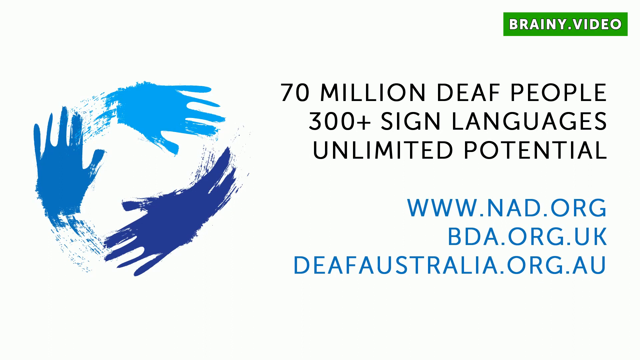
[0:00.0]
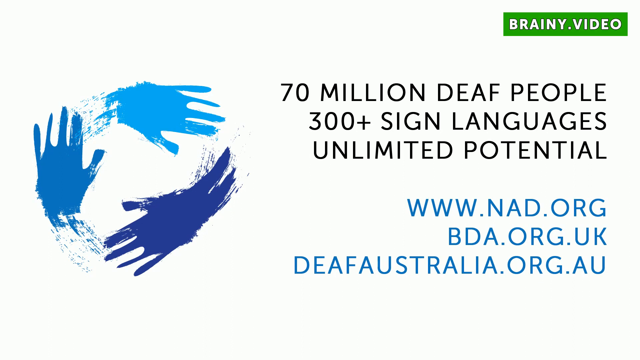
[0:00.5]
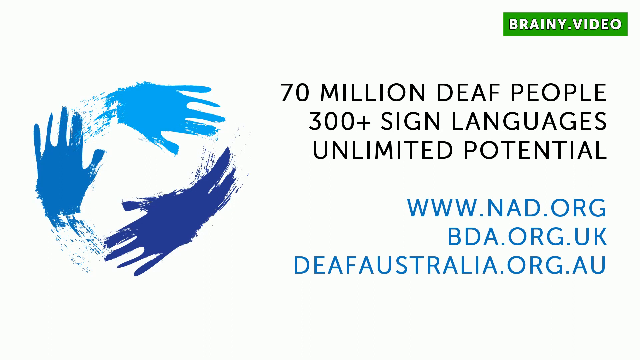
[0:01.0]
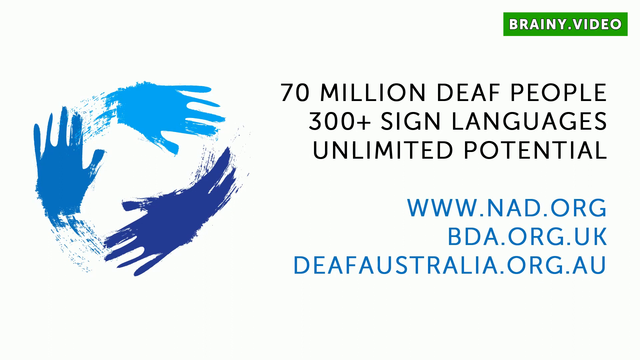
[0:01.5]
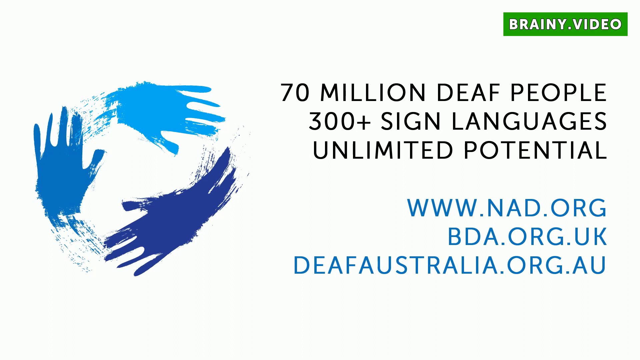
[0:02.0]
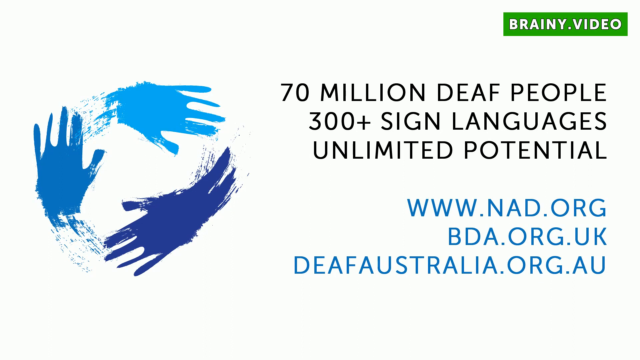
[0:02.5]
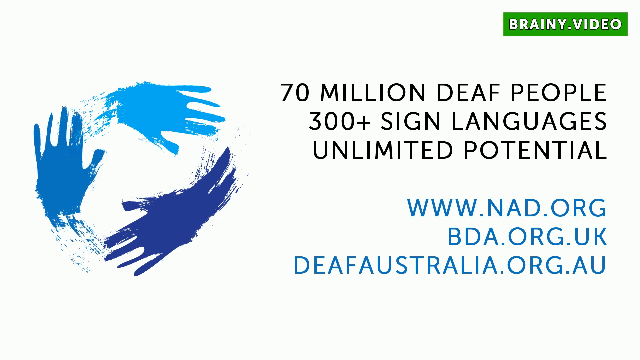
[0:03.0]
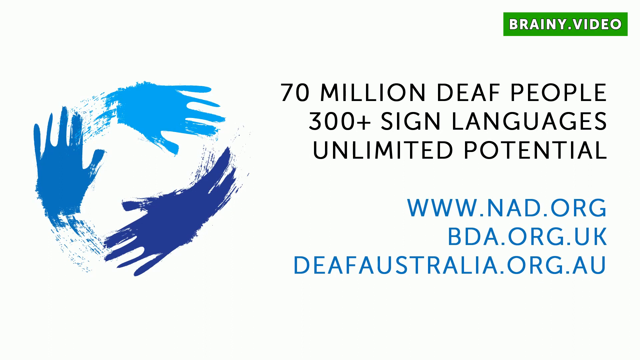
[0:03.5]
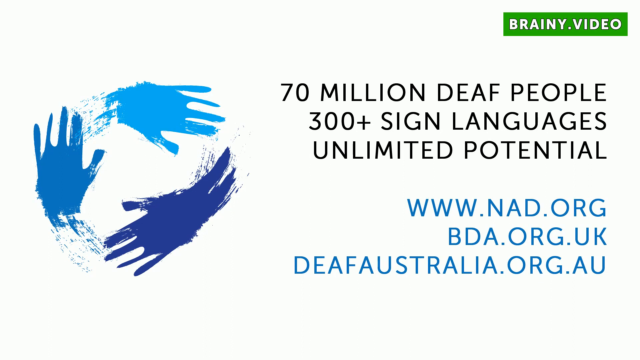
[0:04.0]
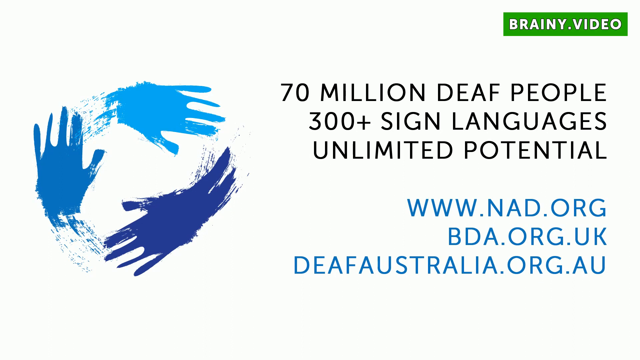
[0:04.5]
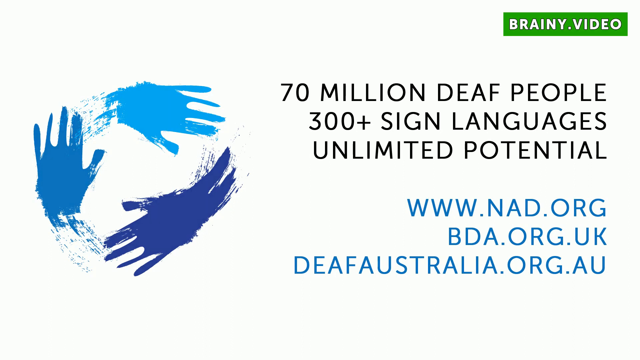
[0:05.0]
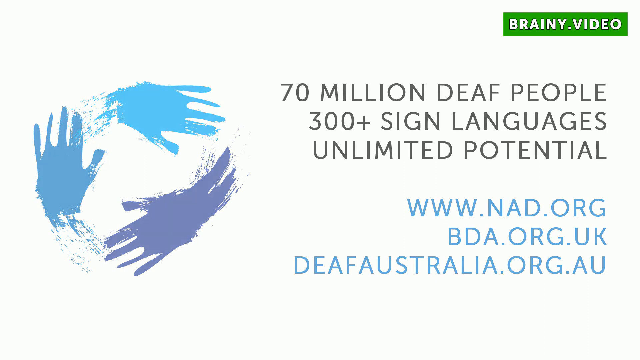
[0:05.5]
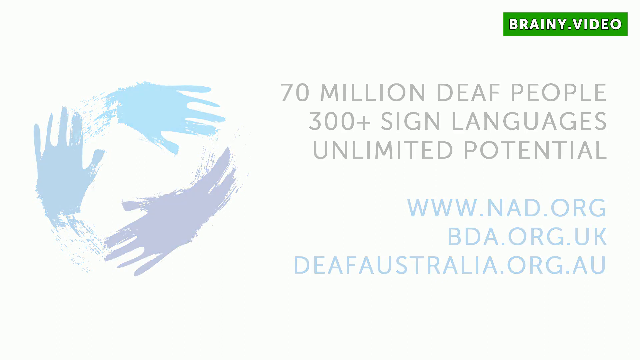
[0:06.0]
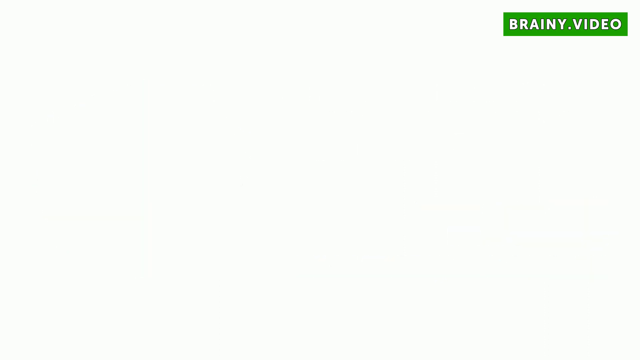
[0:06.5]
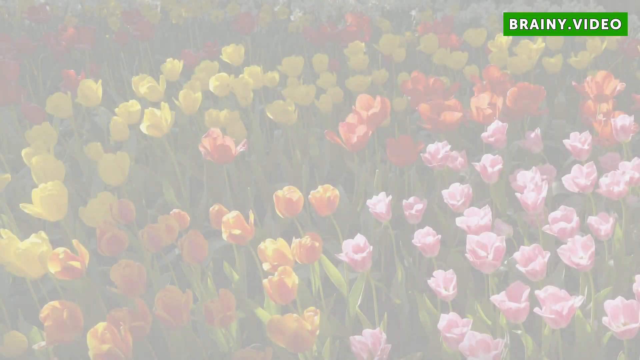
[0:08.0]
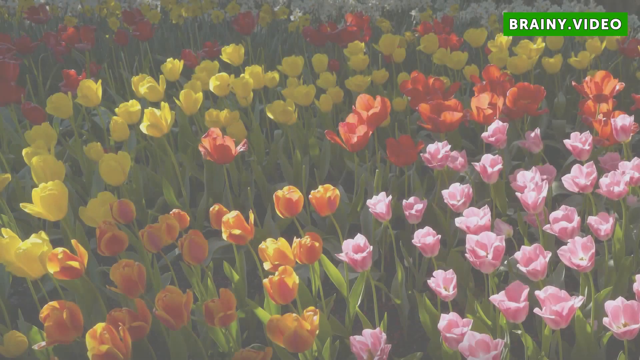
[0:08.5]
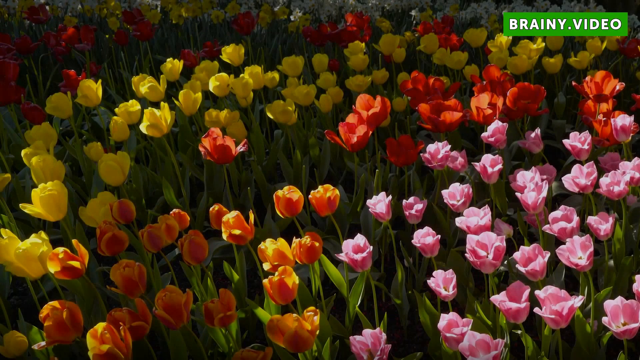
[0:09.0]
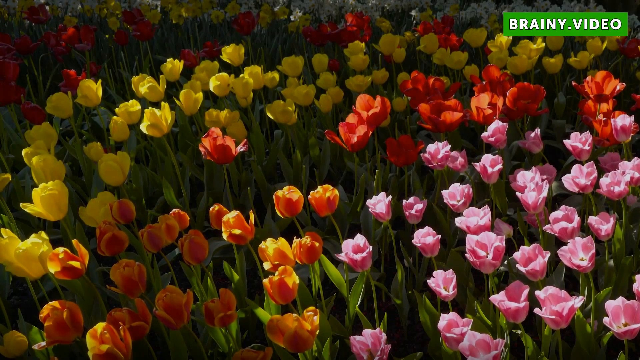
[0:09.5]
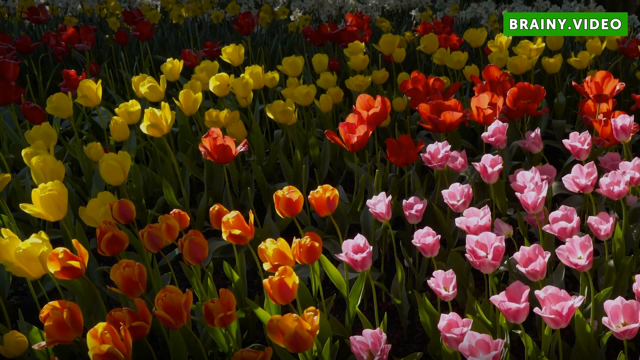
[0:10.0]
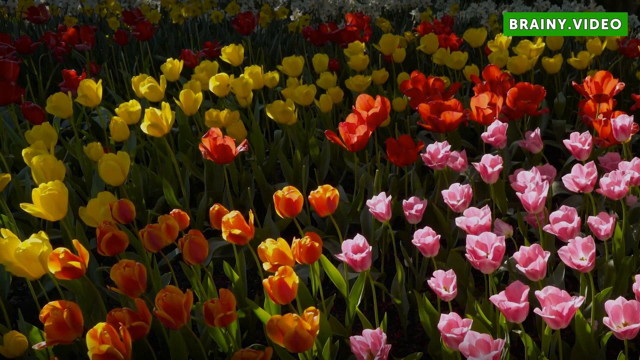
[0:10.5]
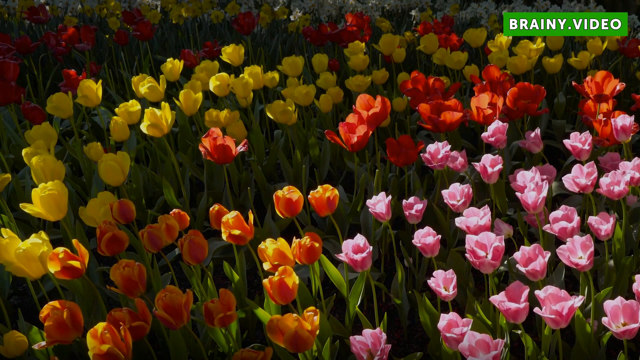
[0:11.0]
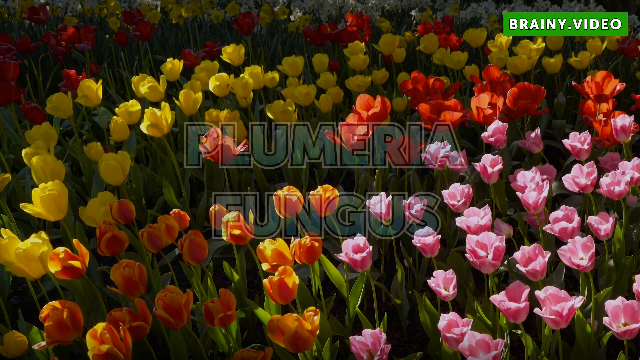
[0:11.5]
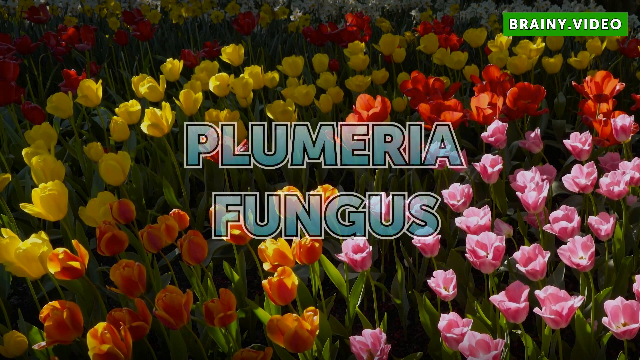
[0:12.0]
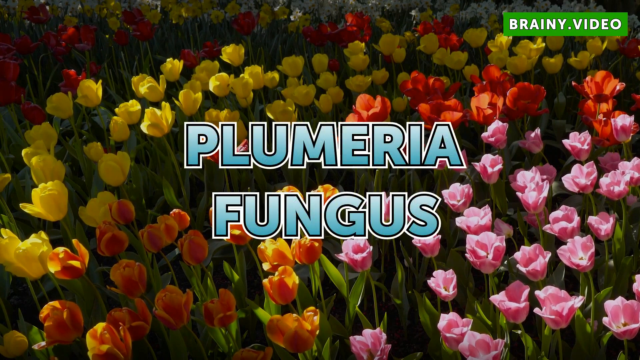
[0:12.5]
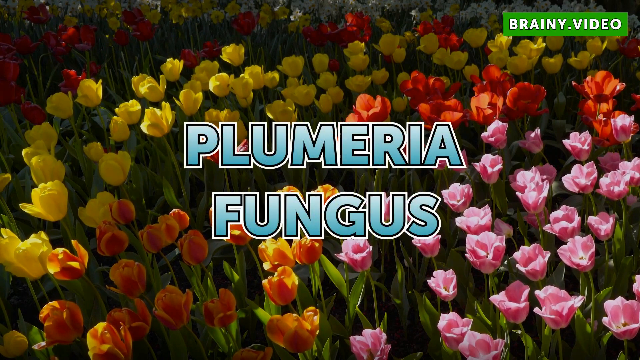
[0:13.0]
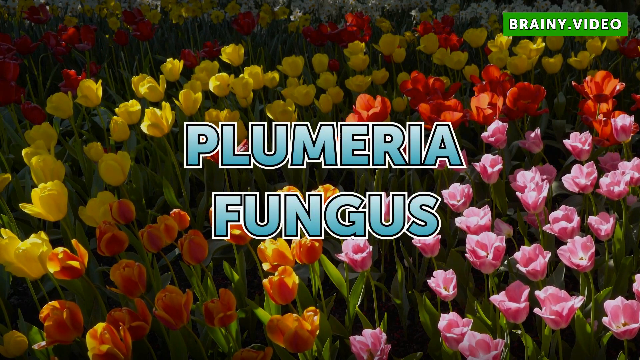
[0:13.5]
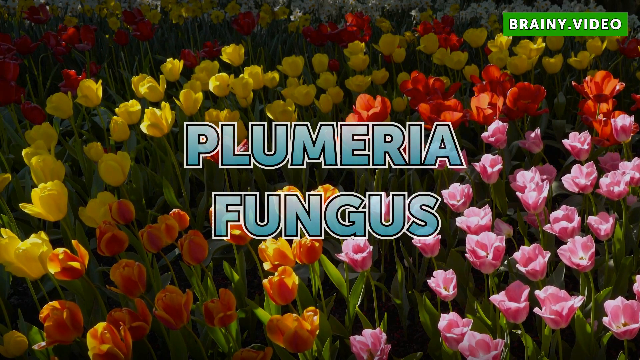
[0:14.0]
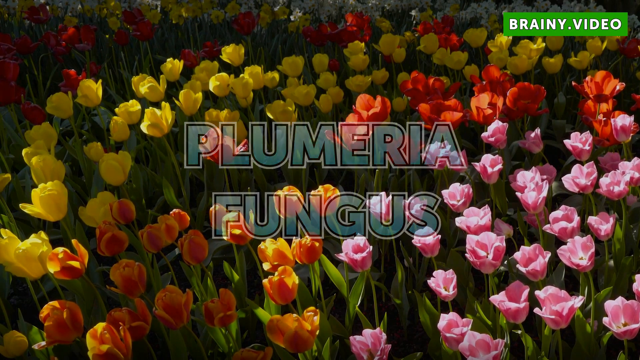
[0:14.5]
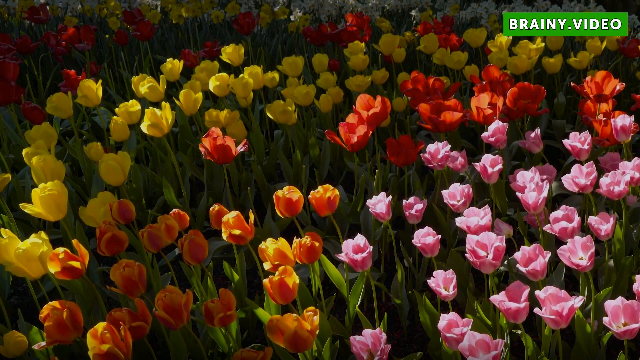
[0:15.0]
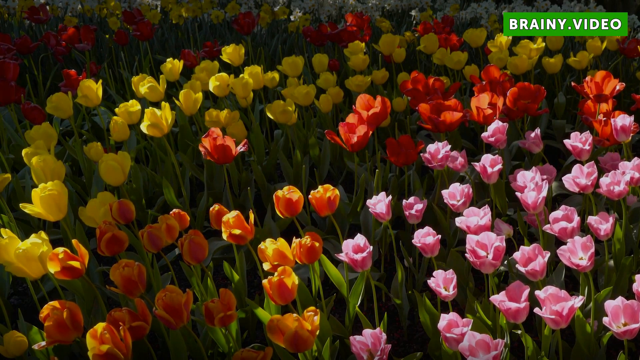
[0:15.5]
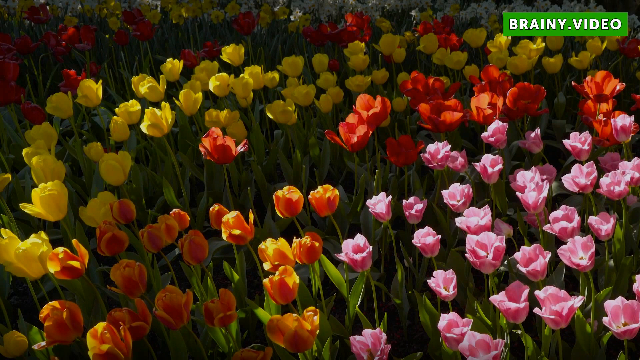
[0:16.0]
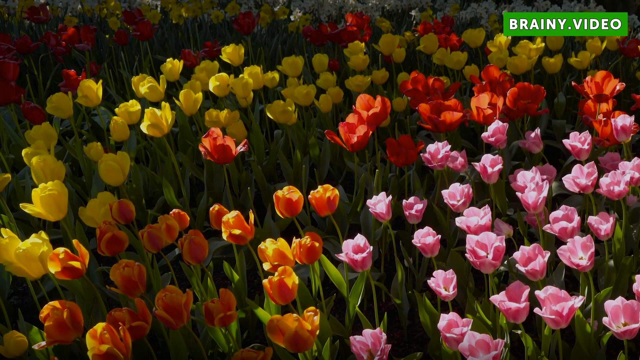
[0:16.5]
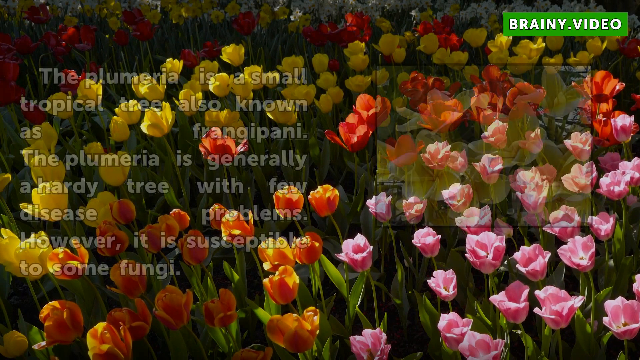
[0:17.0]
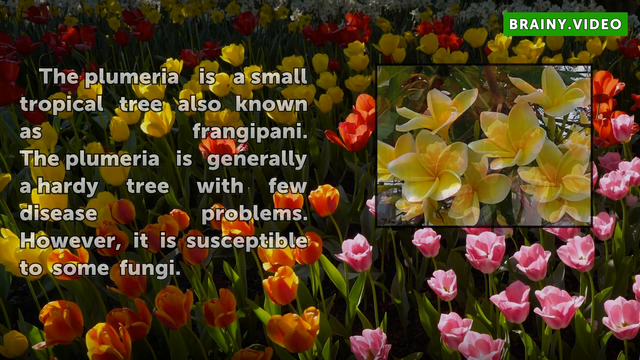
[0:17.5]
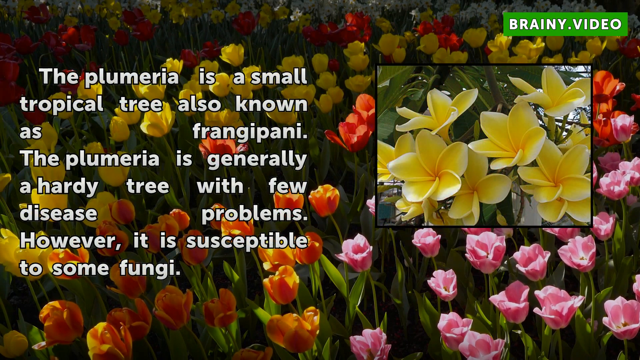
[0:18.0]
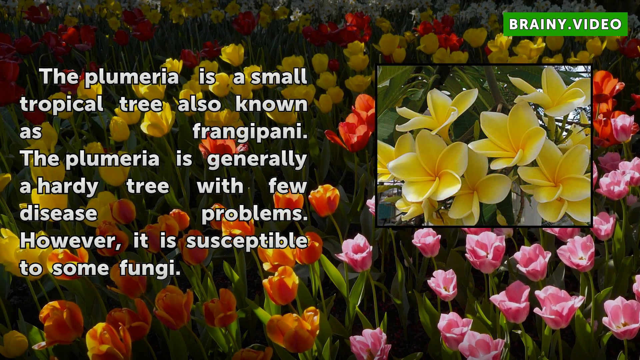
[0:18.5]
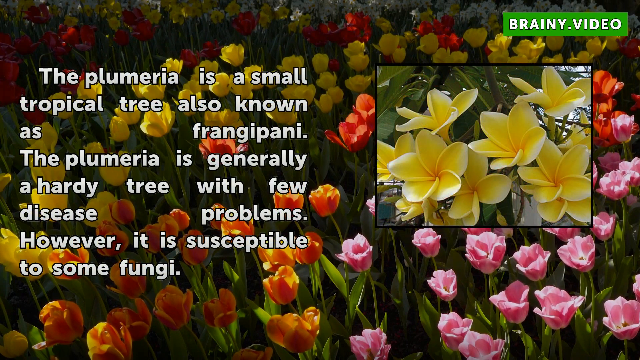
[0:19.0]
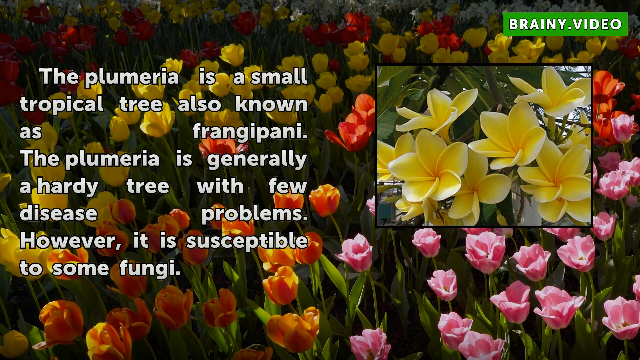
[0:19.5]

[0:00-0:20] The video opens with text about deaf people: "70 million deaf people, 300 plus sign languages and unlimited potentials," along with the web addresses "www.nada.org," "bda.org.uk" and "www.deafaustralia.org.au." A flower is shown, apparently dated May 9th, with the words "Plumeria fungus" appearing three times. A description of the flower follows: "the plumeria is a small tropical tree also known as frangipani the plumeria is generally a hardy tree with few diseases problems however it is susceptible to some fungi." The video is credited to brainy.video.